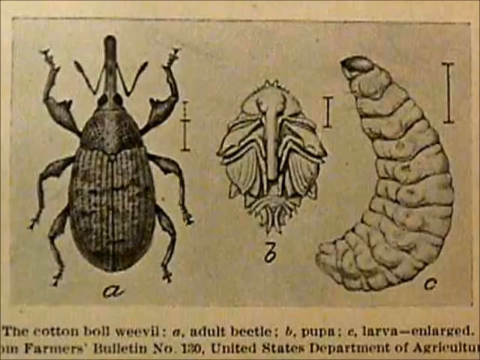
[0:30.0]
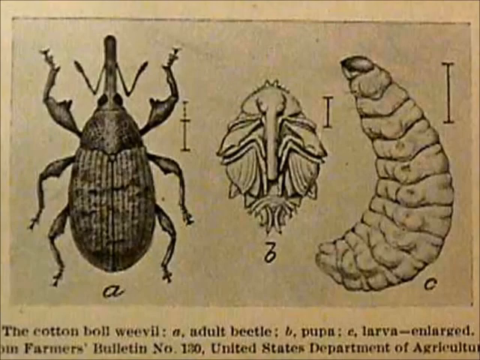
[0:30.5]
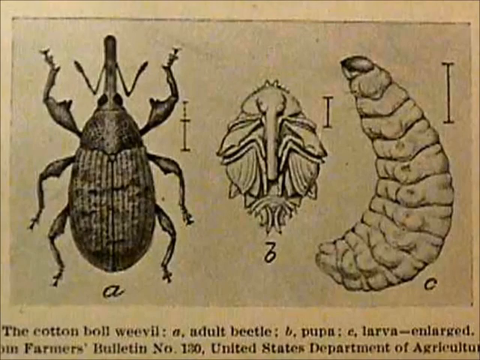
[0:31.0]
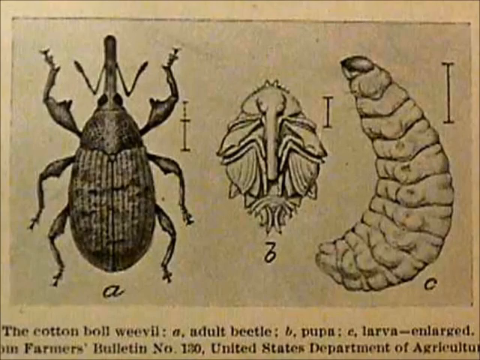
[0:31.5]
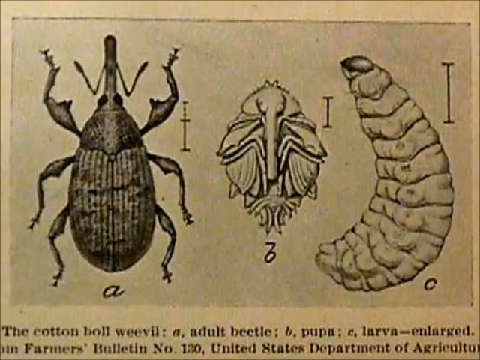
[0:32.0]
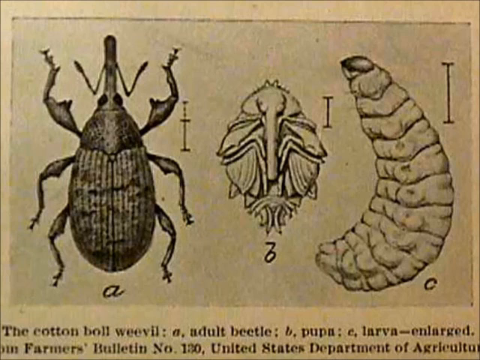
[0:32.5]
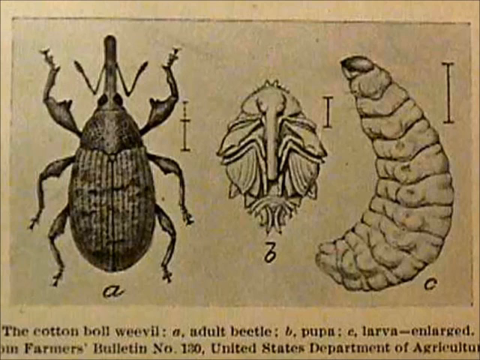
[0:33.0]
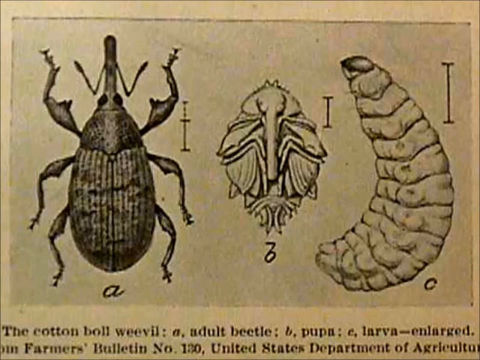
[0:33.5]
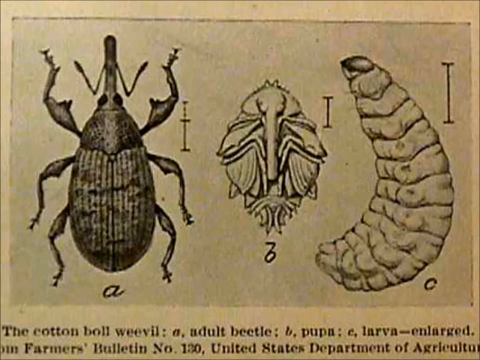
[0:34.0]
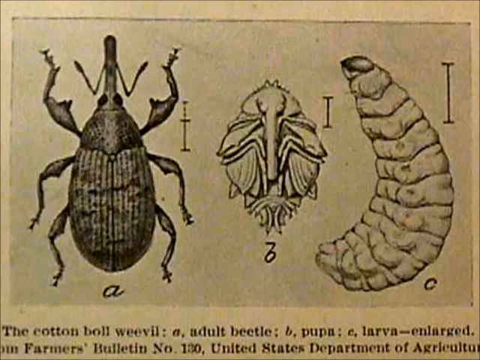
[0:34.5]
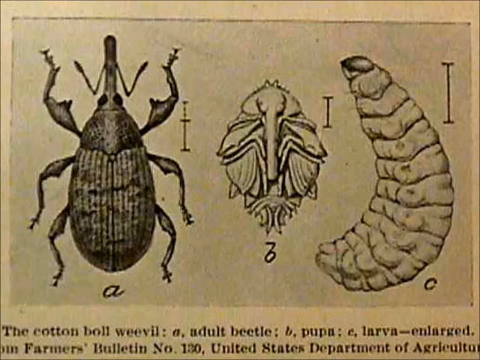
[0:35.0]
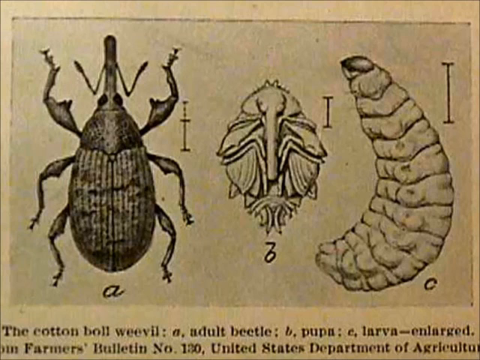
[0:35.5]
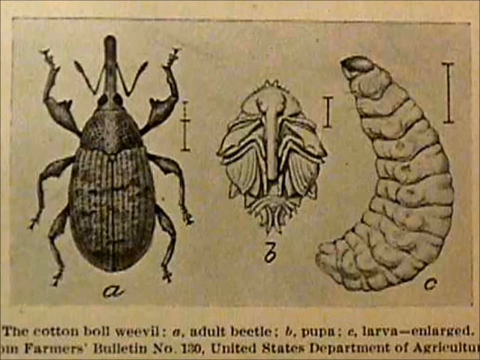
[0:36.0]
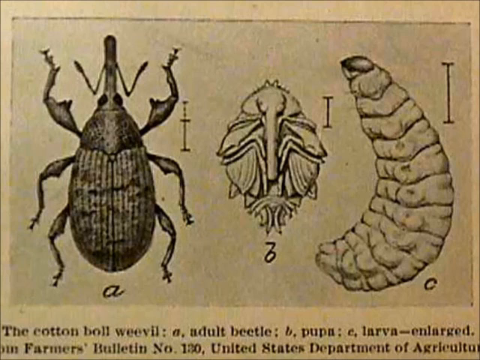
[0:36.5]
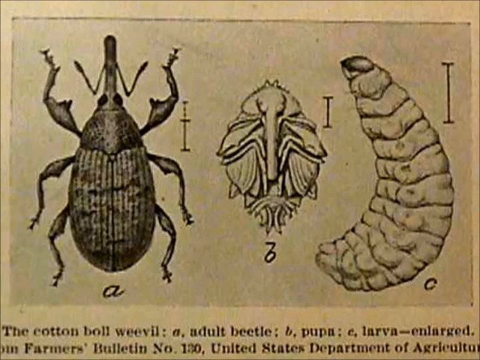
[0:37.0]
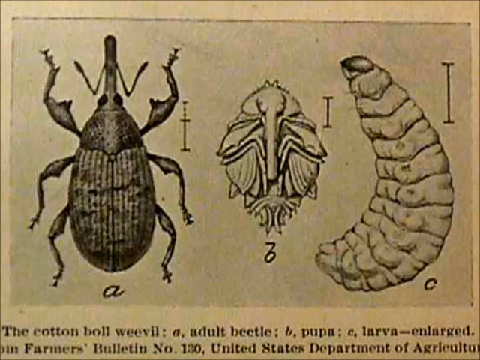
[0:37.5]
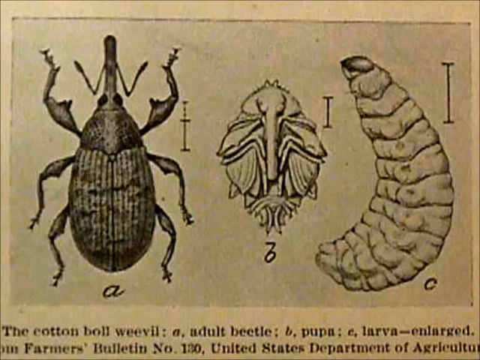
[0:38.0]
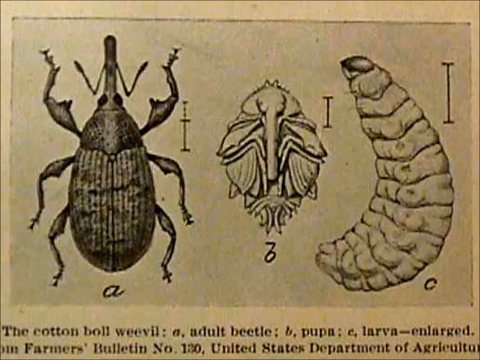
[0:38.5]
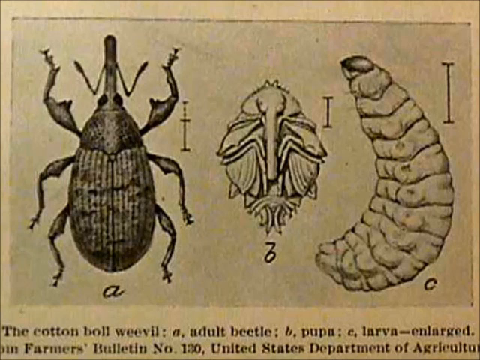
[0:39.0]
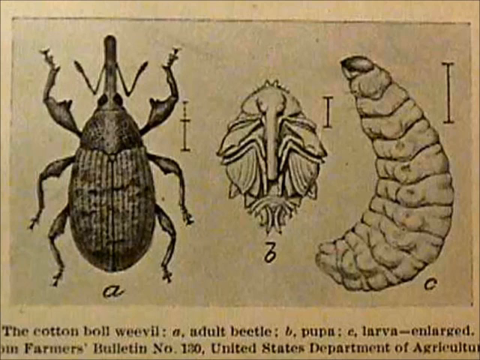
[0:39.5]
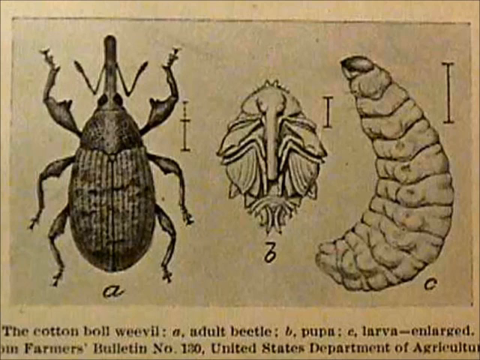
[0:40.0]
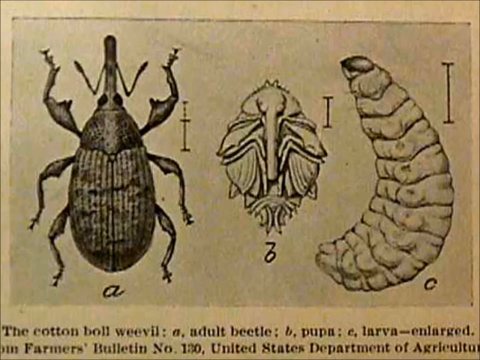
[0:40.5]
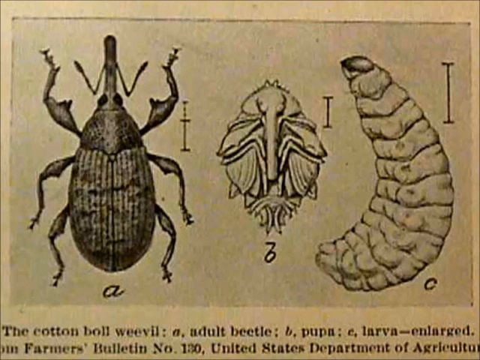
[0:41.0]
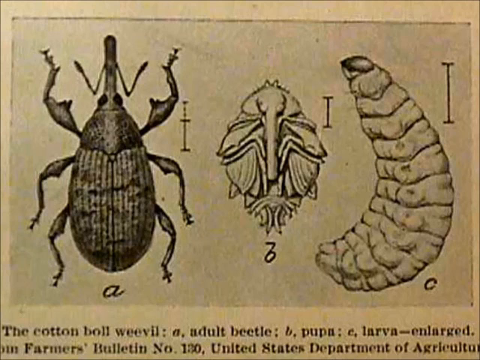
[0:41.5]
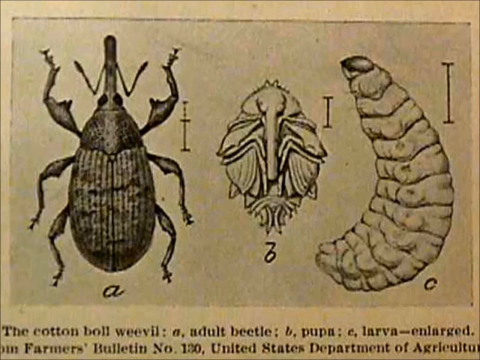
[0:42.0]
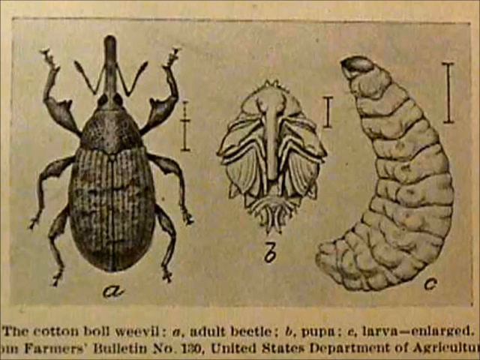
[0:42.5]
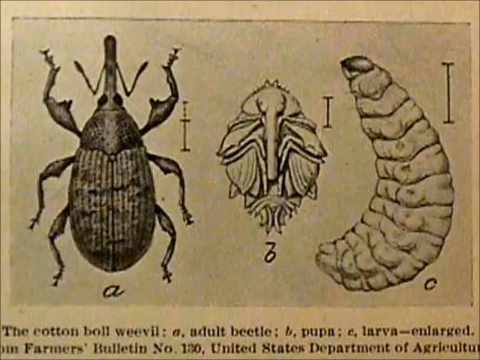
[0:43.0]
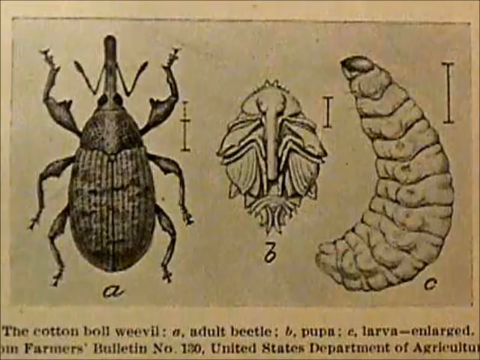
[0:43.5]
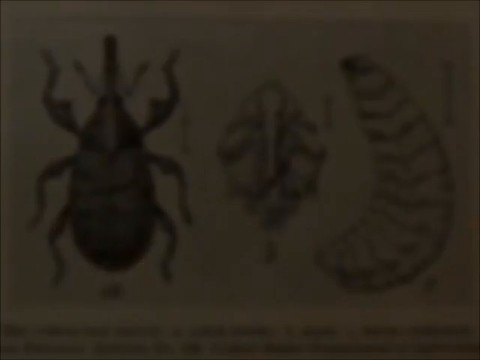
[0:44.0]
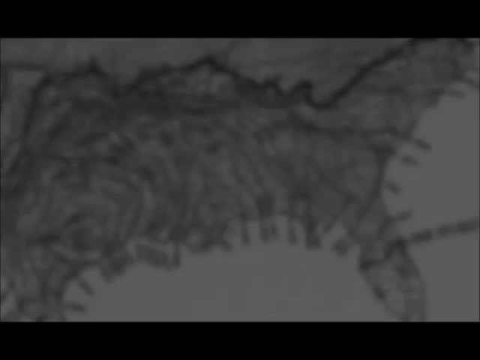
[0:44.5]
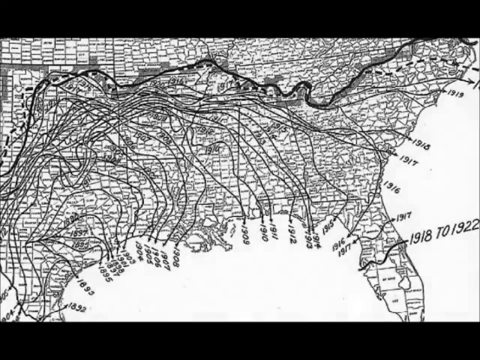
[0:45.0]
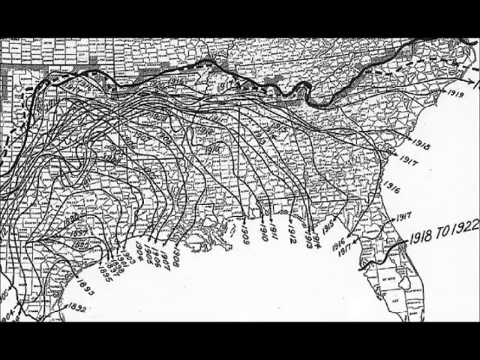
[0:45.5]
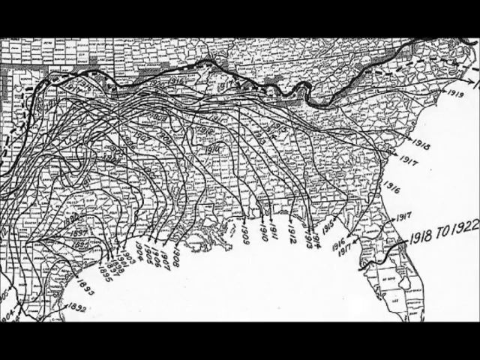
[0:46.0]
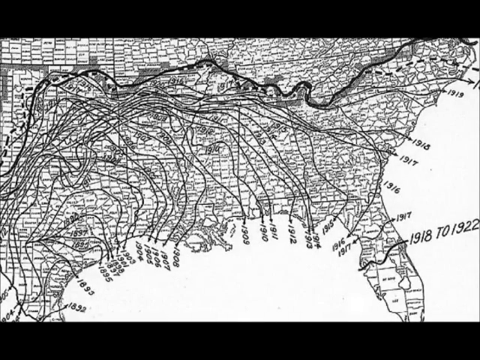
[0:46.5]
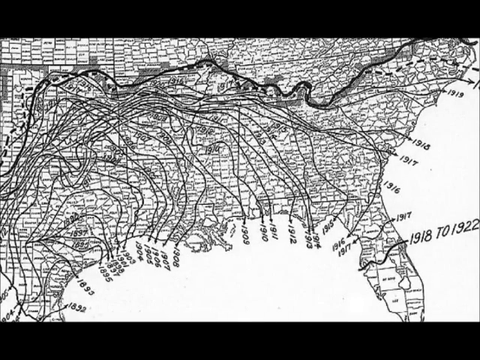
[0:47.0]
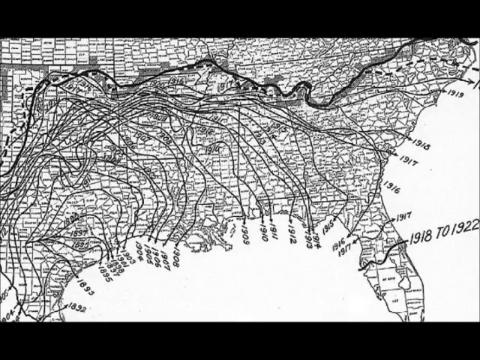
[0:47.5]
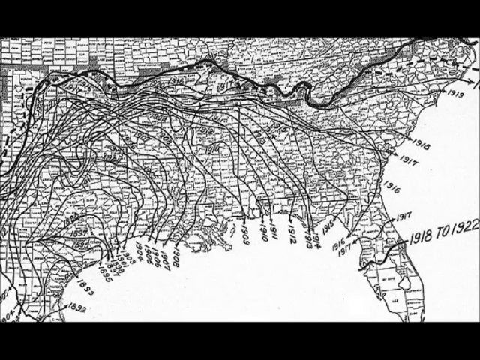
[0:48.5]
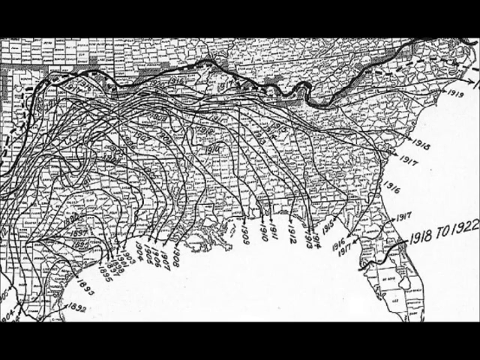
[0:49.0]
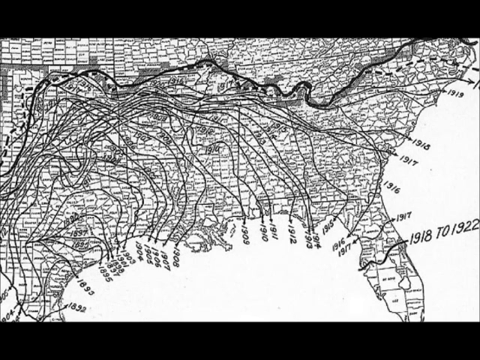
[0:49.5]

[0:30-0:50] A black and white photo on a black and white background has information across the bottom. On the right side is the bug with its head facing up, a long slender nose and two antennae coming off each side that go down back toward the head and then up away from it; it has three legs on each side. Underneath it is the letter A. Next is a diagram between the larva and the grown form, with a B below it. Then comes the larva, with its head up to the left and its body going down and around to the right and then down, with a C below it. Underneath, in black lettering, is "the cotton boll weevil, adult beetle, pupil, larval enlarged," followed by another line of information. There is also a map of the lower United States with various numbers and lines on it. One line comes in just above West Virginia on the right side, angles down and around, cuts through the middle of Tennessee, loops up and over, and then comes down on the corner of Texas where the Gulf of Mexico is. Arrows point up to different places, with years underneath them all down the side of Florida and four of them up the east coast.